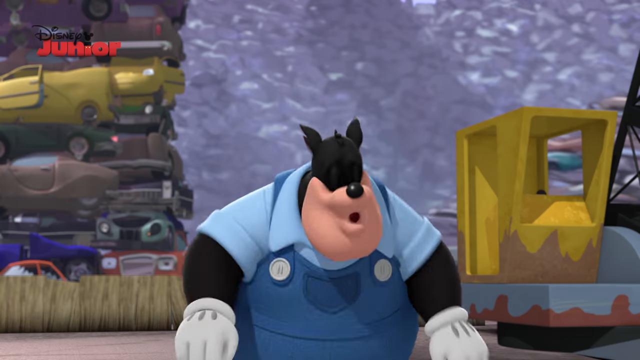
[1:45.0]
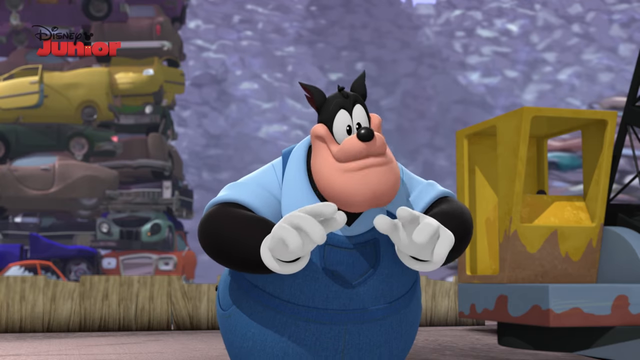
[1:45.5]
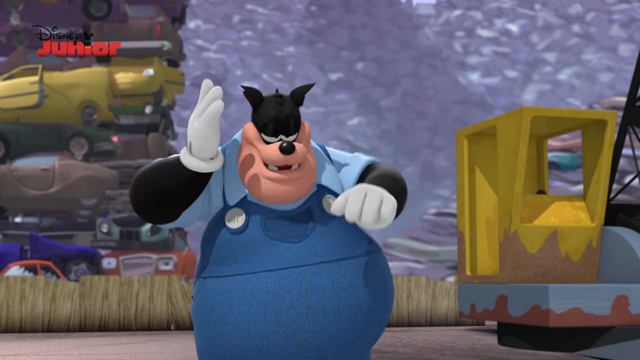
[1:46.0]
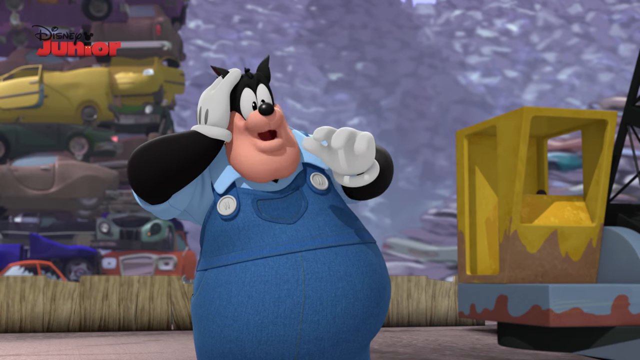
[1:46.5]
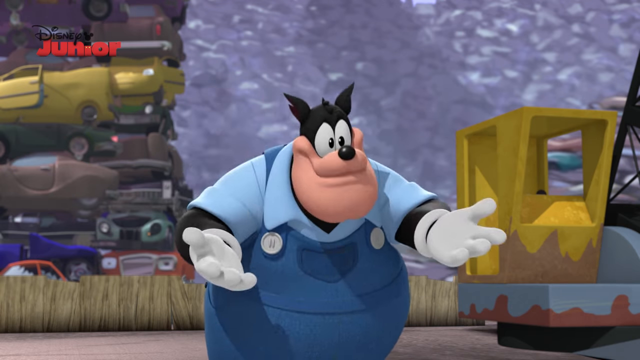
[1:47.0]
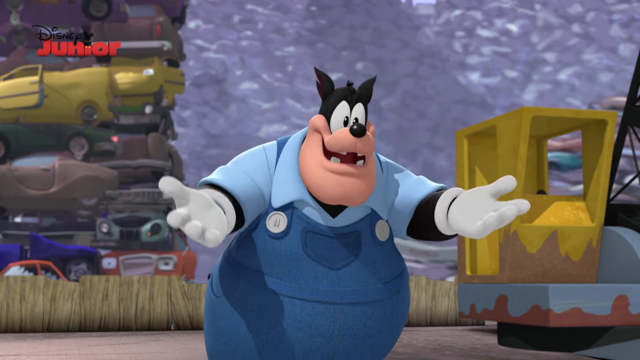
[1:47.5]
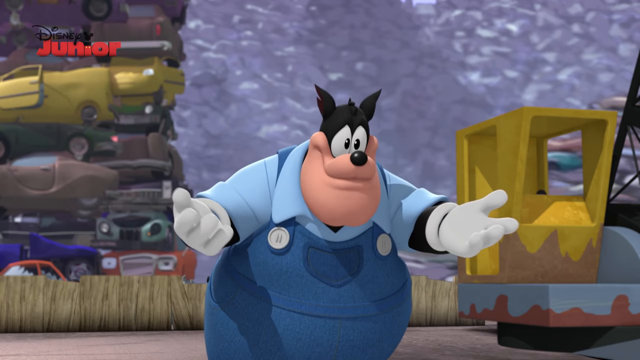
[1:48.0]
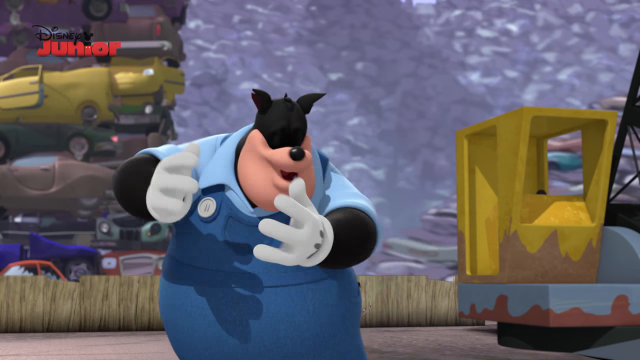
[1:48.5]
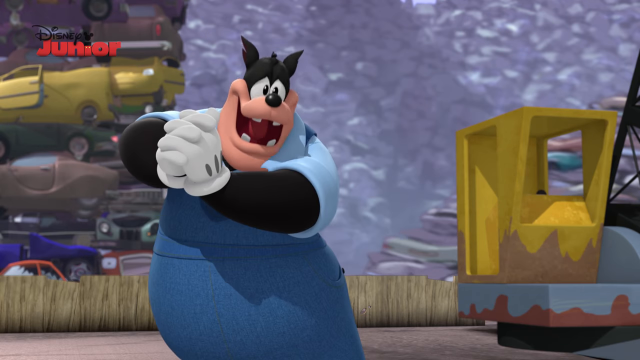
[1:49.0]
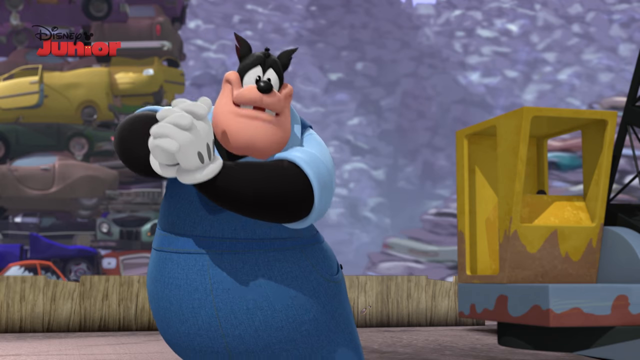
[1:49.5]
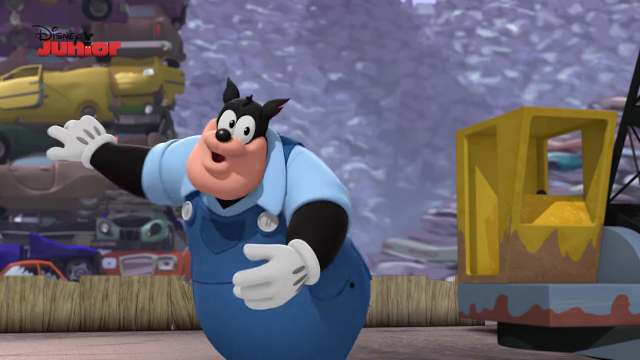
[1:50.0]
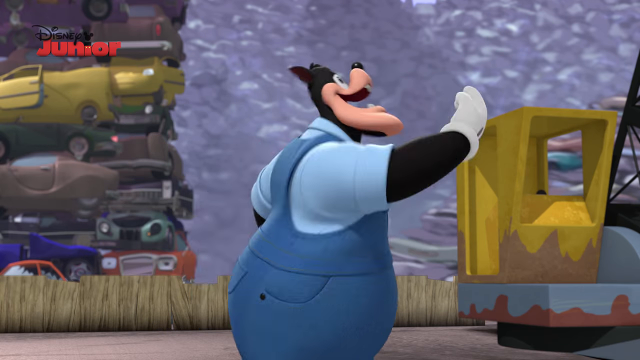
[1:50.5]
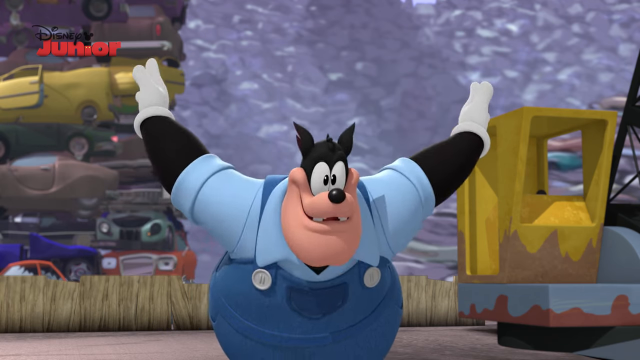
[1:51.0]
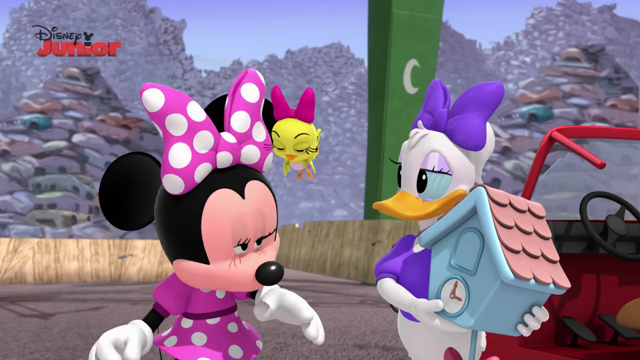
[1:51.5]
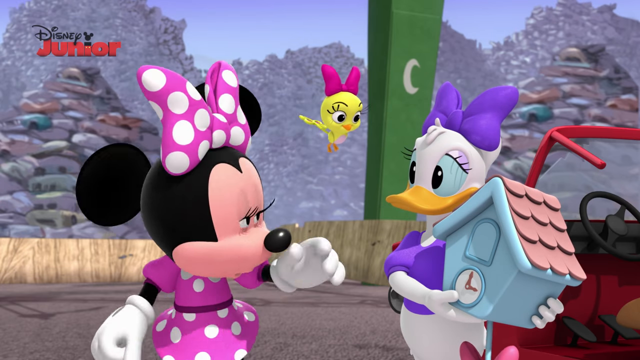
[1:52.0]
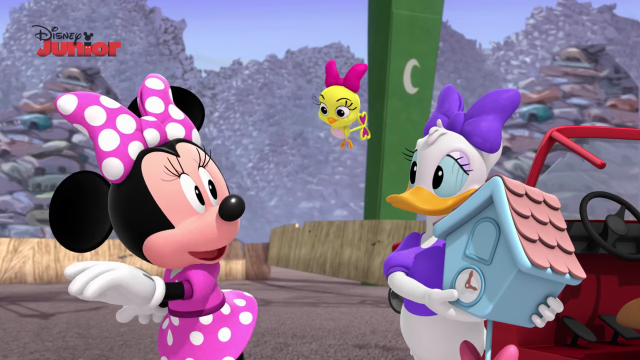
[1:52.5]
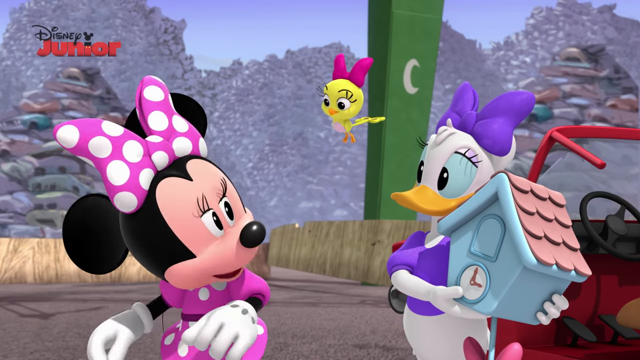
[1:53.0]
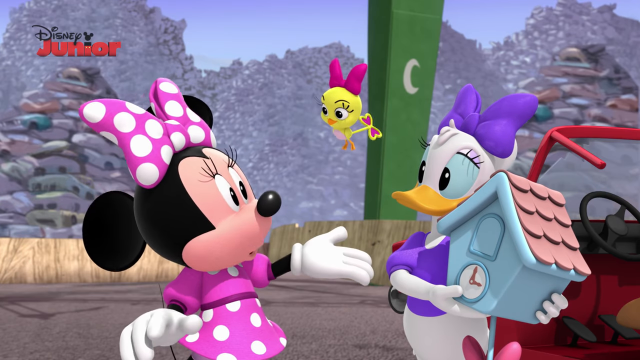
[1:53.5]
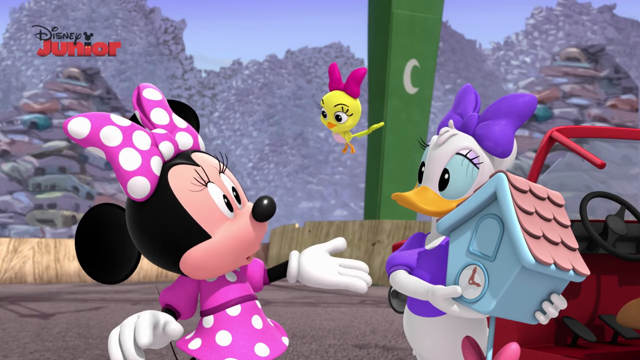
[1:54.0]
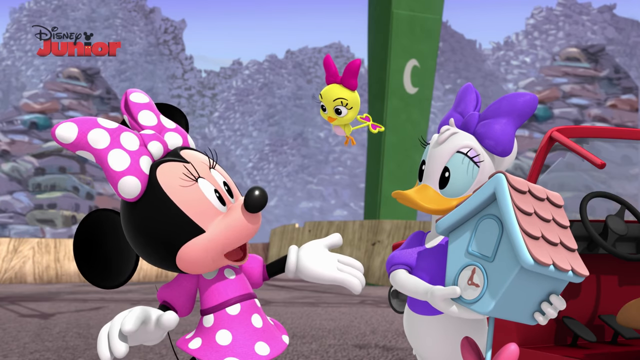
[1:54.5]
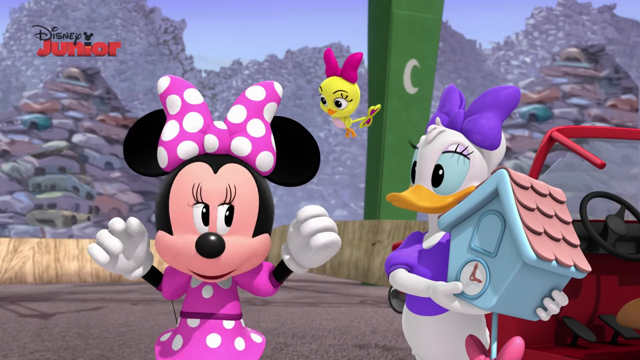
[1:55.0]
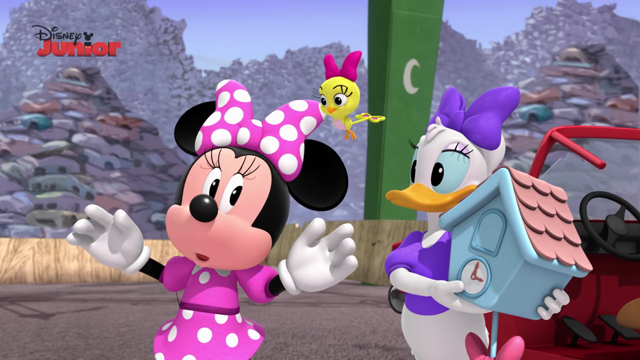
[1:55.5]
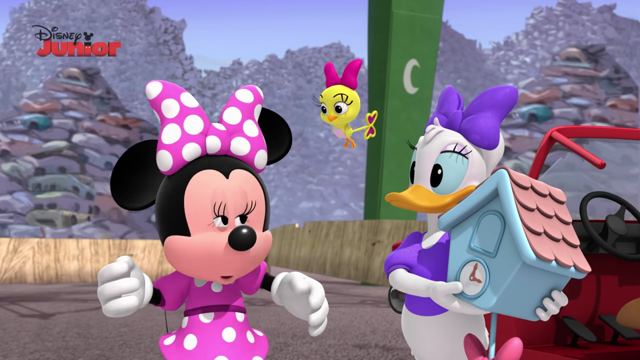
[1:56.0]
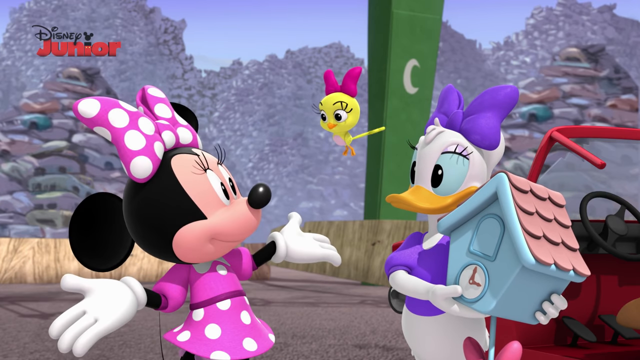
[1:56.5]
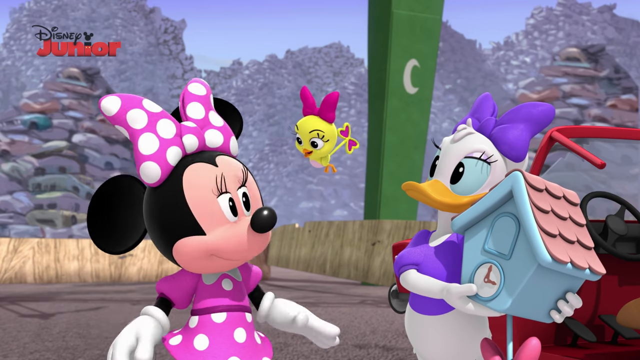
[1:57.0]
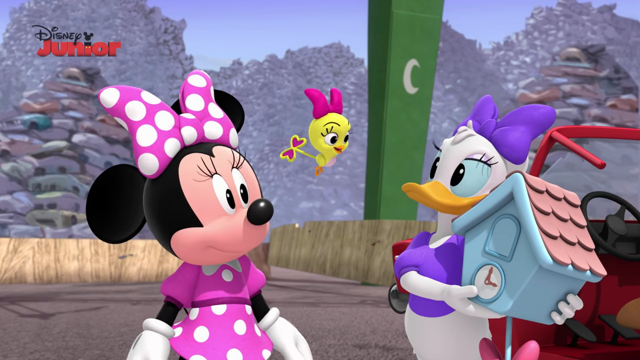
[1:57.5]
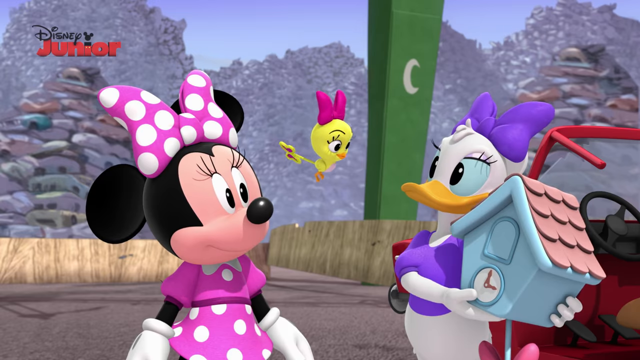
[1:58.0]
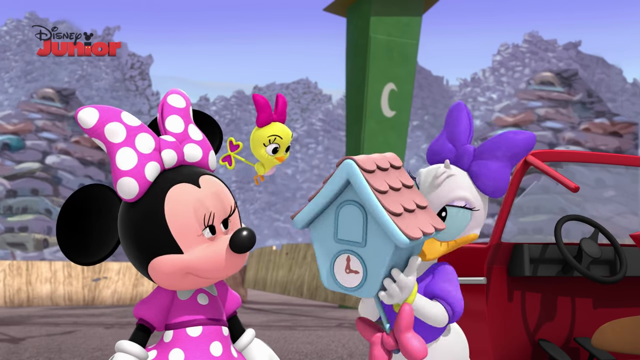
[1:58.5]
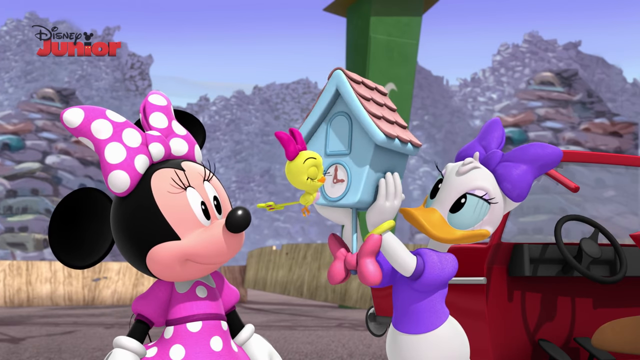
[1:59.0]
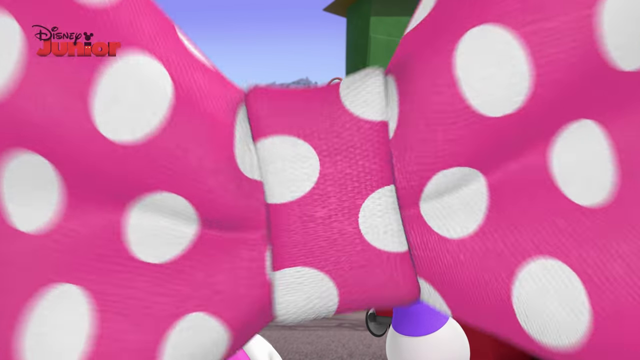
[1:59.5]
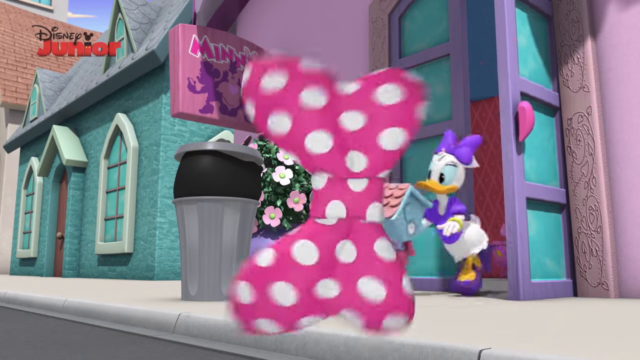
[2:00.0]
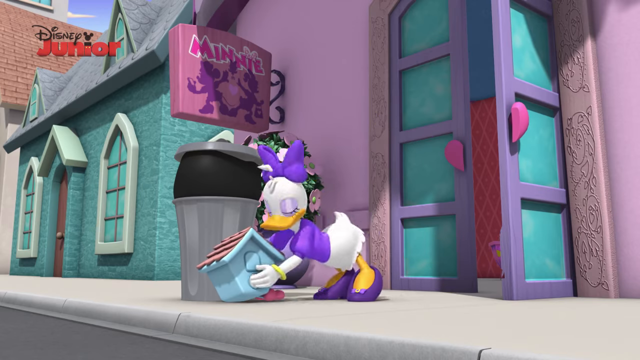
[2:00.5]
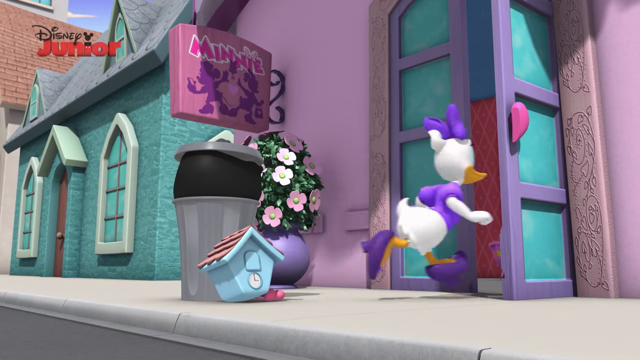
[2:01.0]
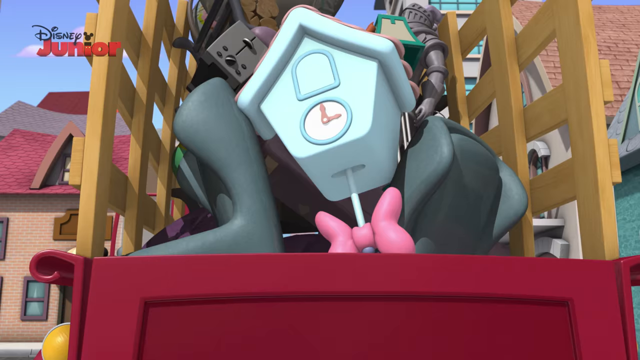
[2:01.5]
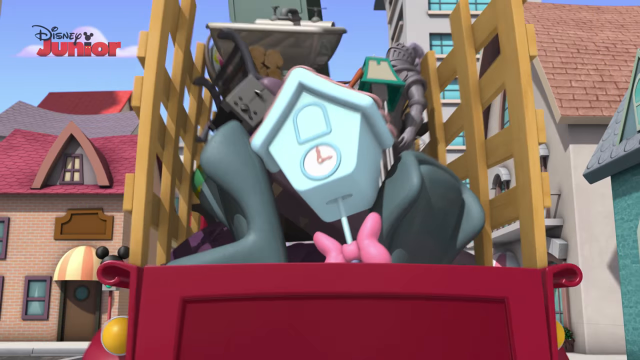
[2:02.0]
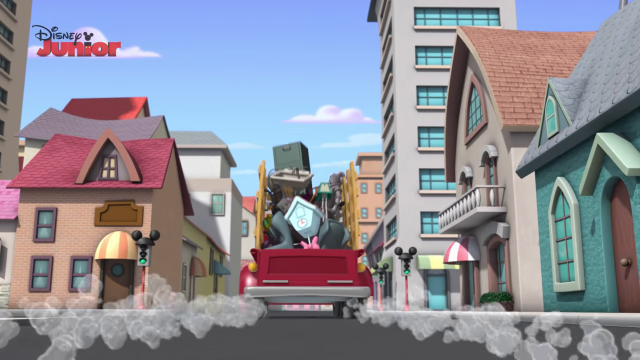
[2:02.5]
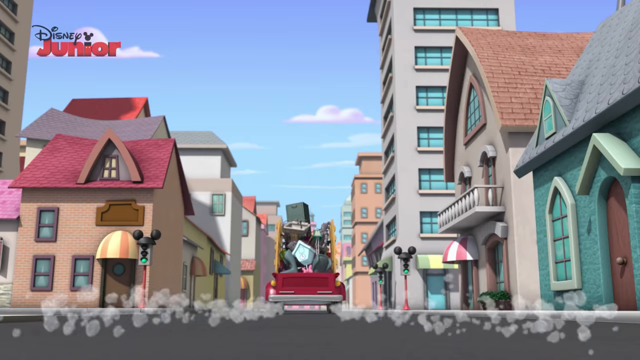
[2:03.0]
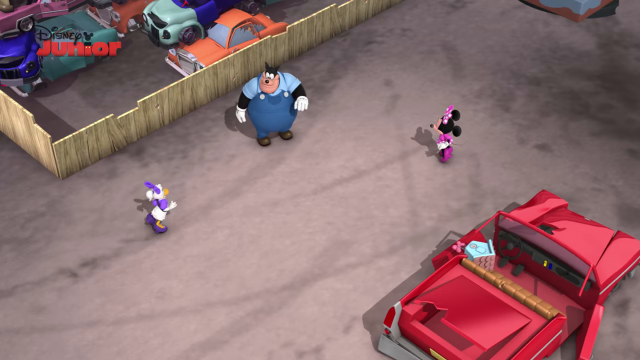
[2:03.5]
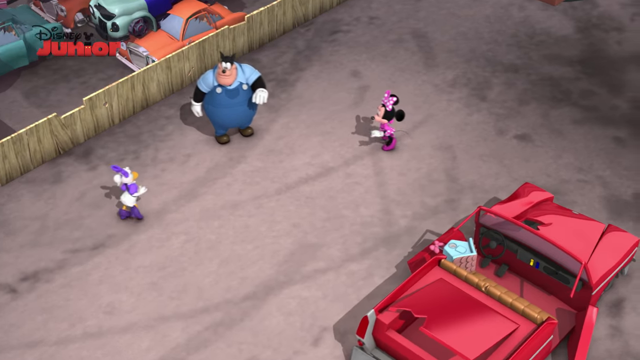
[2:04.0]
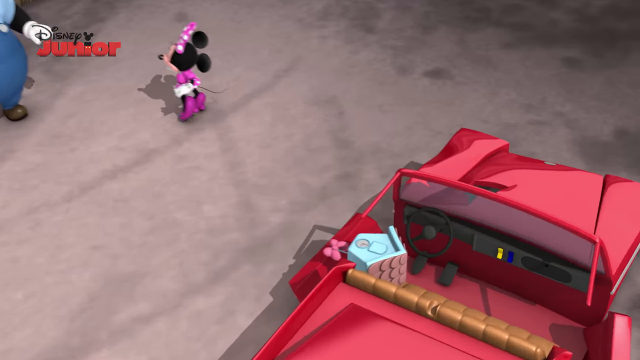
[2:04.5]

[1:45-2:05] A close-up shows Pete, who seems very happy, talking animatedly toward the camera as the only character on screen, with many piles of cars still in the background. He makes big sweeping gestures with his hands and arms, bows over at times and clasps his hands, then spins around in a circle like a ballerina before making a small bow with his arms flared behind him. The camera then shows the three female characters: Minnie on the left, Daisy on the right holding the blue cuckoo clock, and the yellow cuckoo bird hovering between them, all facing the left side of the screen. Minnie talks very animatedly, hands waving; at one point she turns back to Daisy and kind of gestures "come this way" by swinging her right arm. She talks to both for quite a while, and then the yellow cuckoo bird talks as well. Finally, Daisy holds up the blue cuckoo clock in triumph; it is kind of shaking as if ready to chime the hour. A blue spinning bow transition follows, and then a quick flashback recap: Daisy running out of the house and placing the blue cuckoo clock next to the trash can, the blue cuckoo clock in the trash pickup truck as it drives away, the women finishing their search of the junkyard, and the drone shot zooming in on the cuckoo clock on the red seat of the convertible.